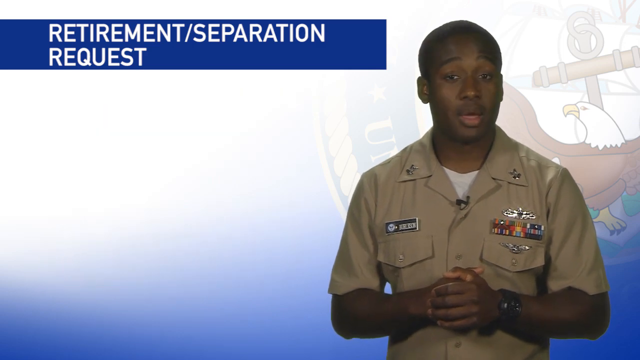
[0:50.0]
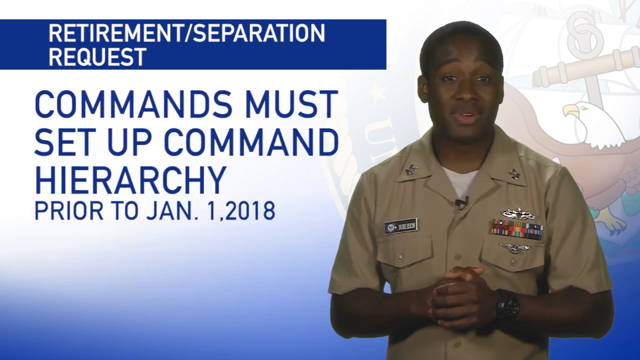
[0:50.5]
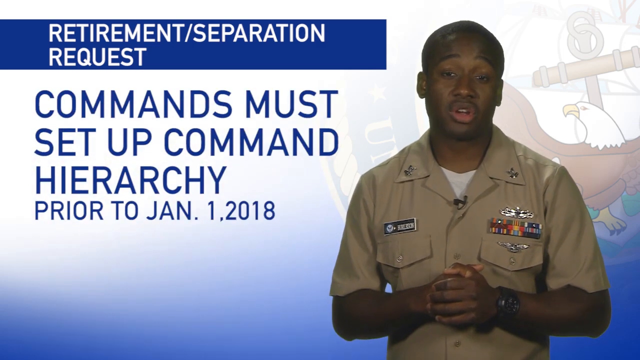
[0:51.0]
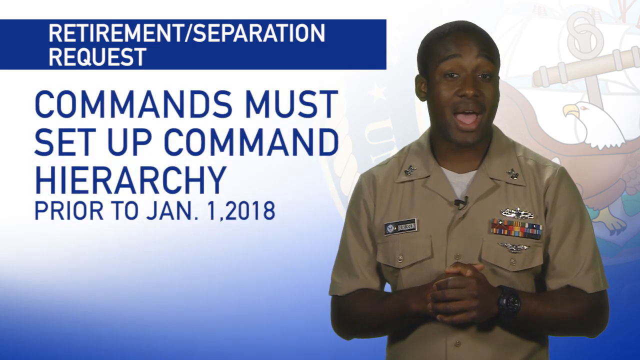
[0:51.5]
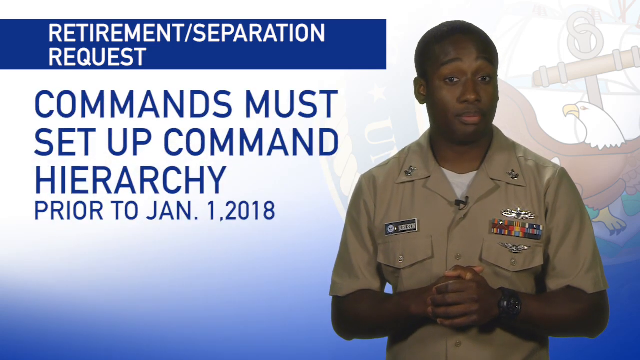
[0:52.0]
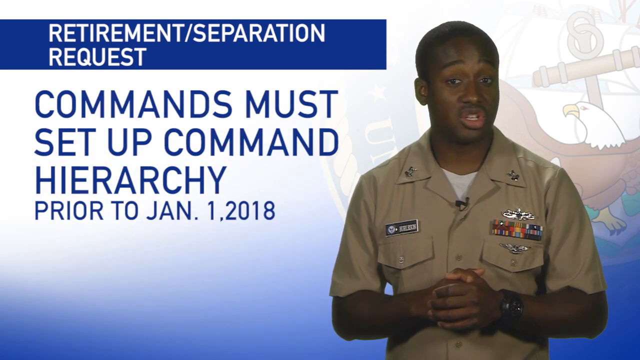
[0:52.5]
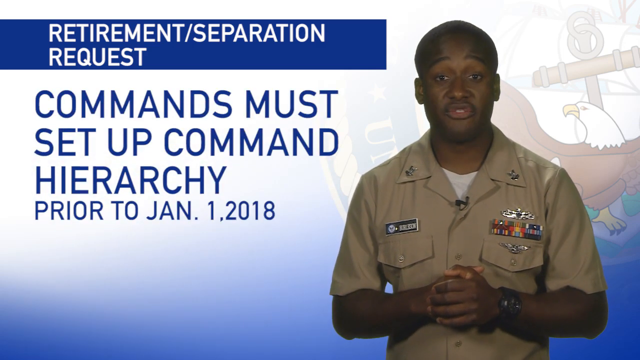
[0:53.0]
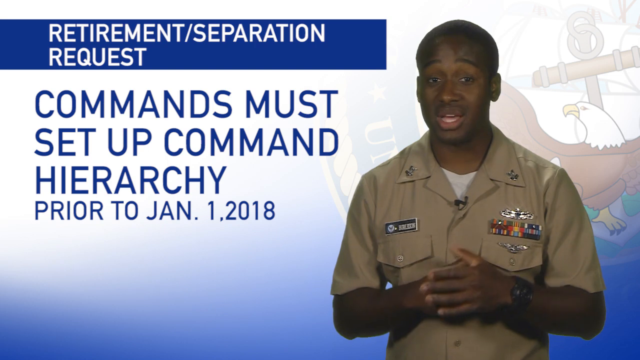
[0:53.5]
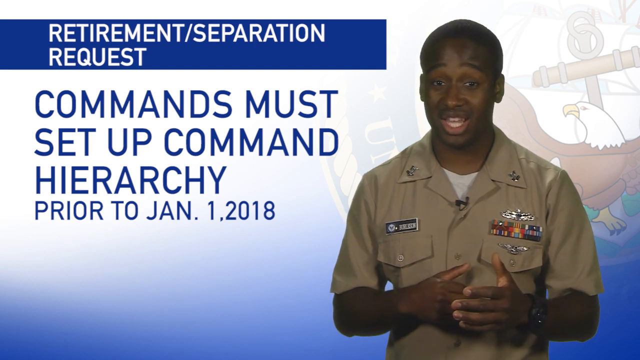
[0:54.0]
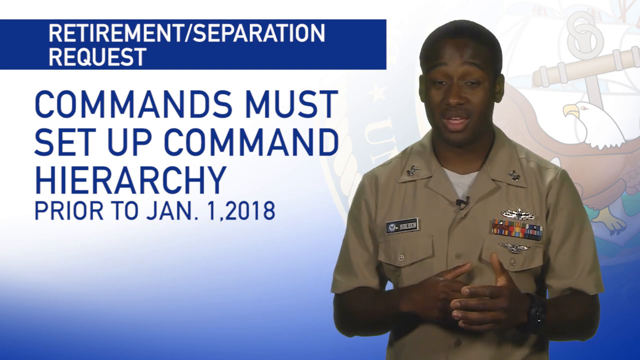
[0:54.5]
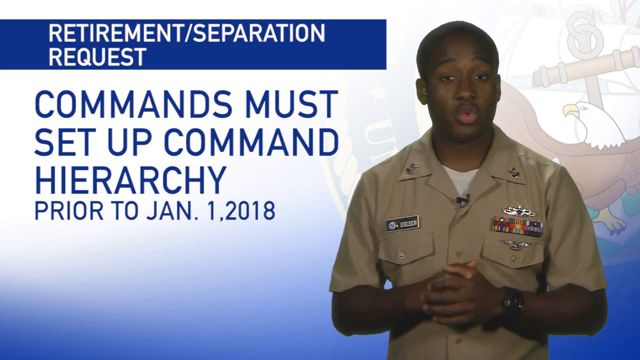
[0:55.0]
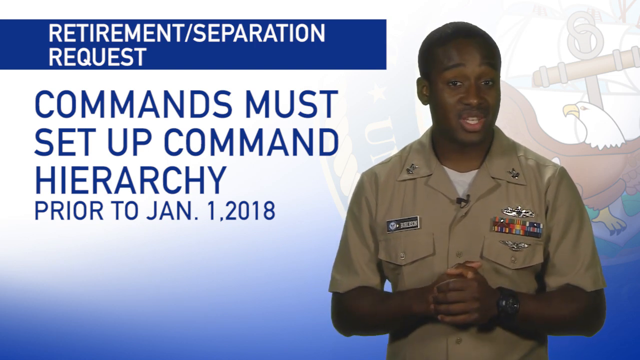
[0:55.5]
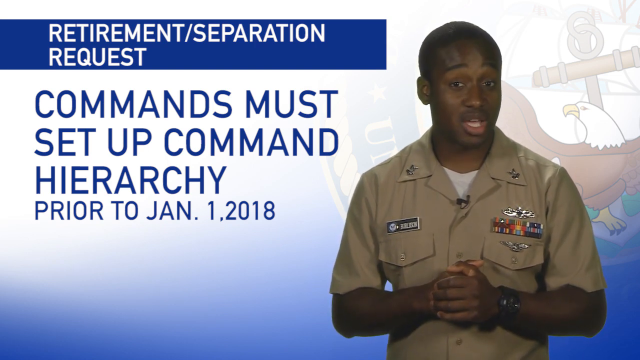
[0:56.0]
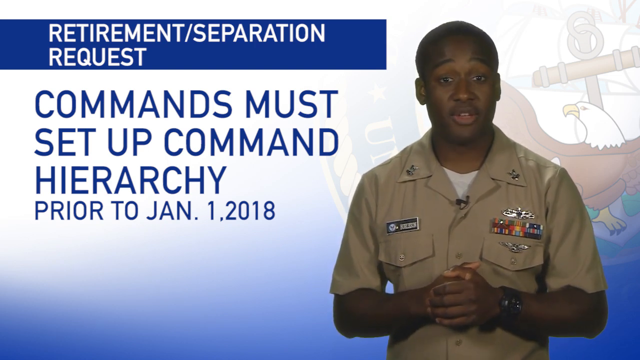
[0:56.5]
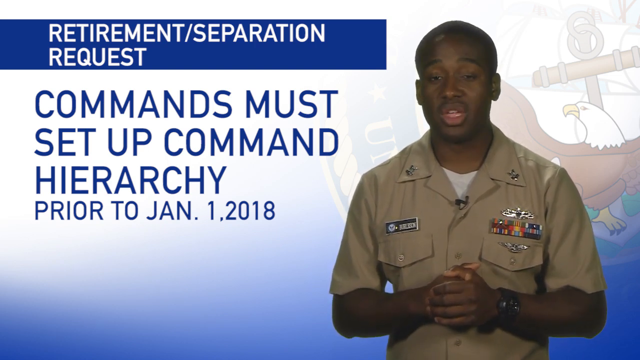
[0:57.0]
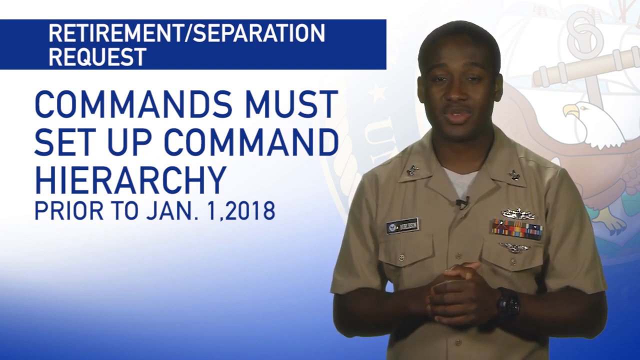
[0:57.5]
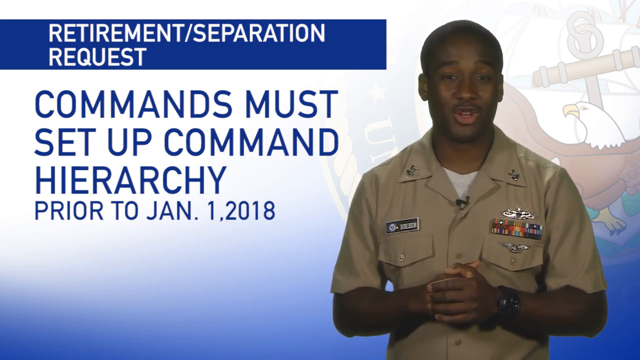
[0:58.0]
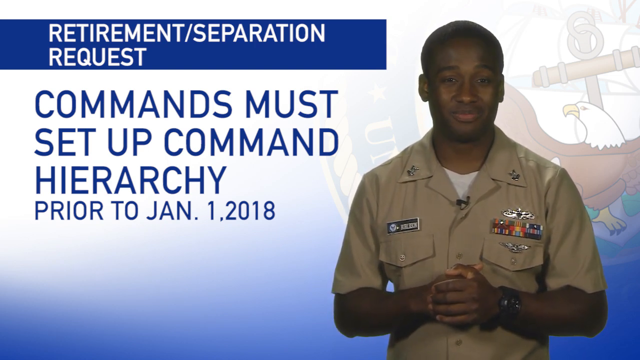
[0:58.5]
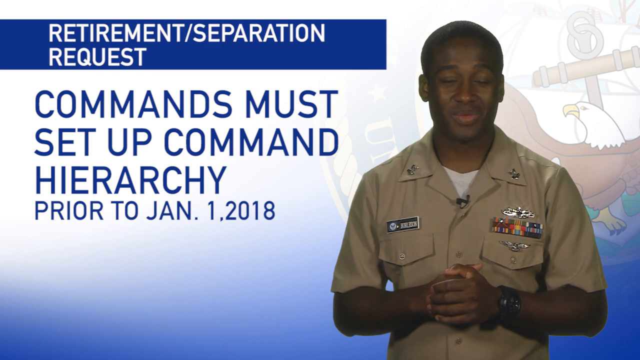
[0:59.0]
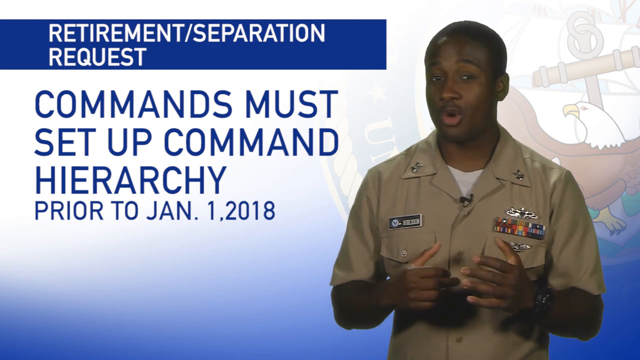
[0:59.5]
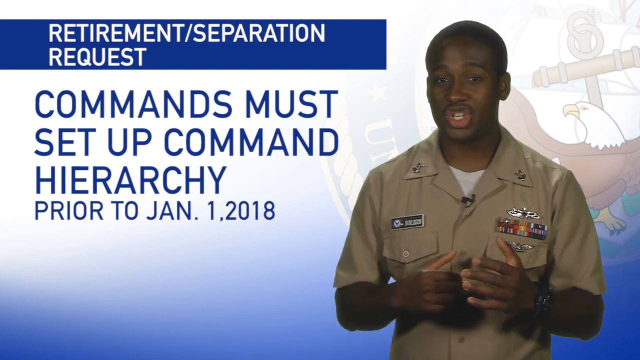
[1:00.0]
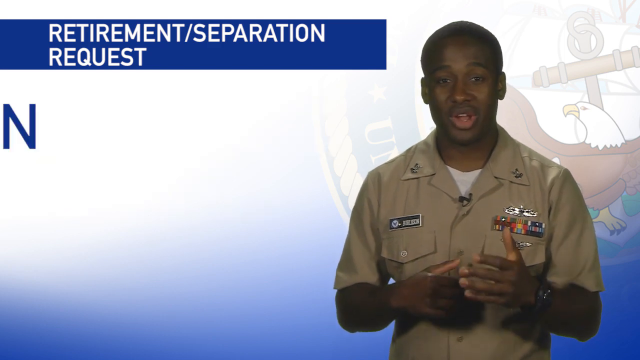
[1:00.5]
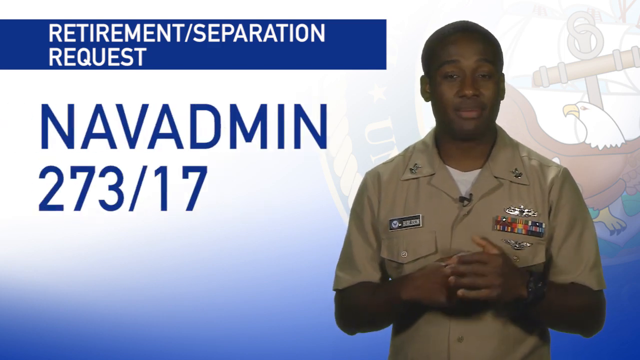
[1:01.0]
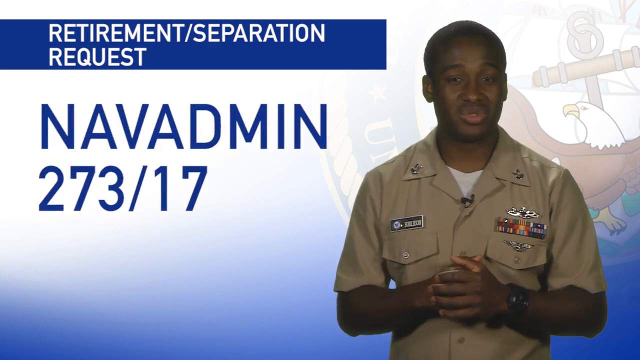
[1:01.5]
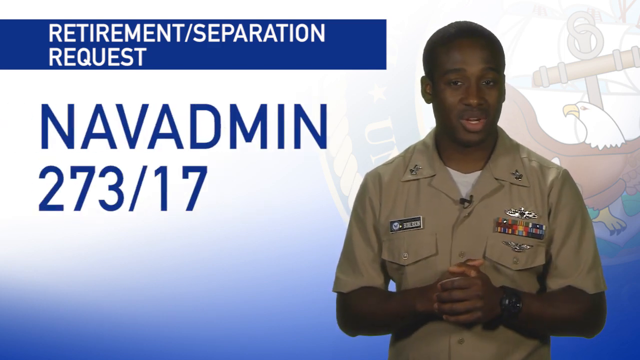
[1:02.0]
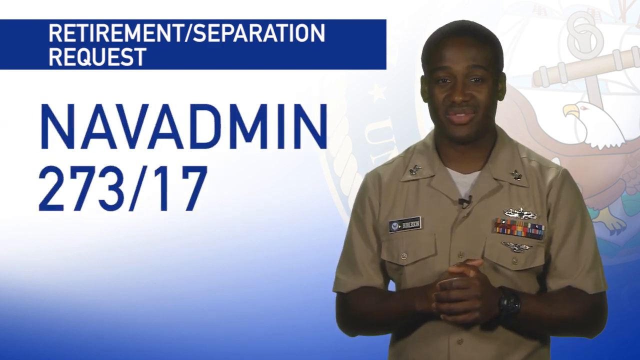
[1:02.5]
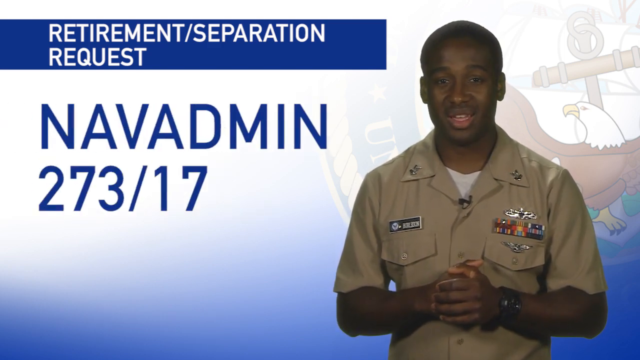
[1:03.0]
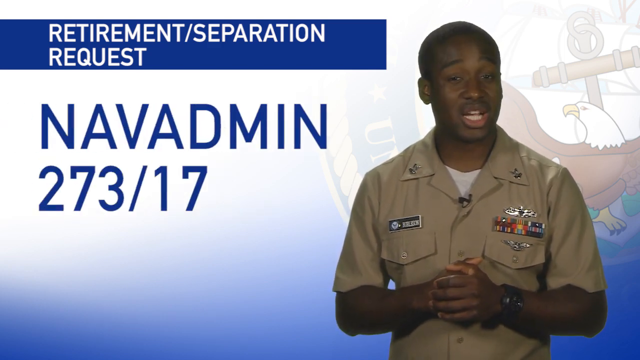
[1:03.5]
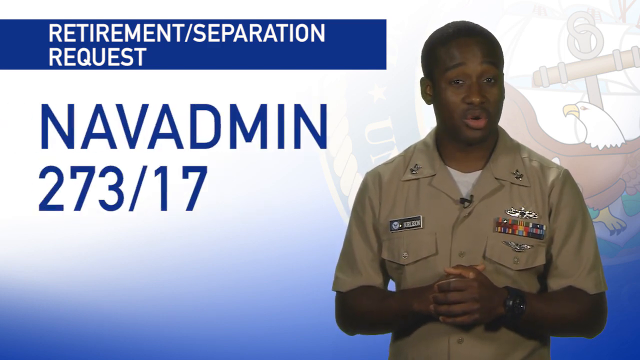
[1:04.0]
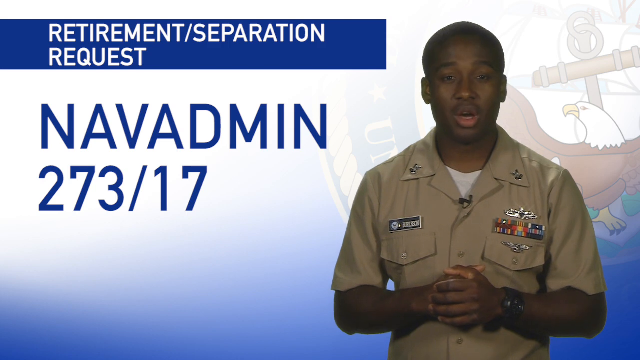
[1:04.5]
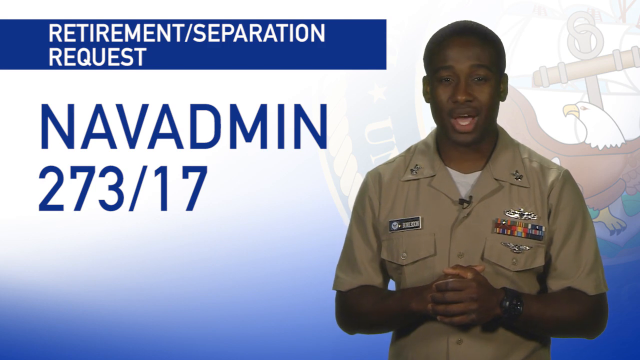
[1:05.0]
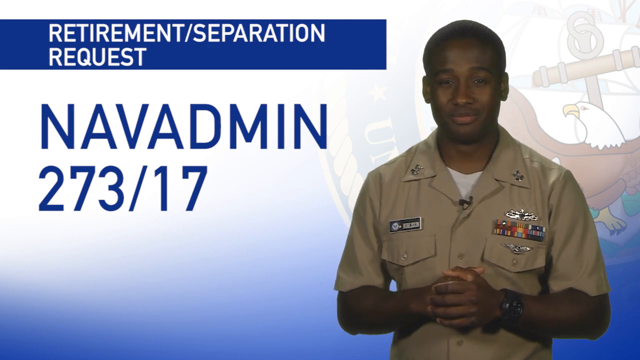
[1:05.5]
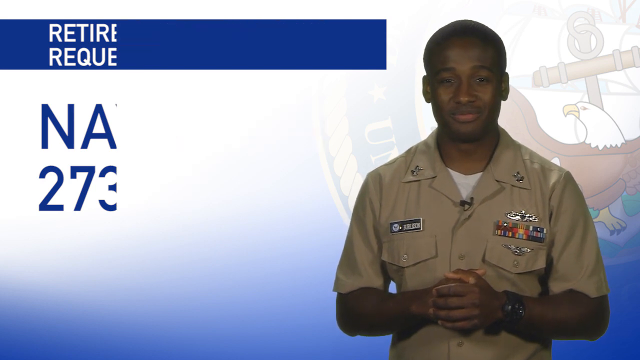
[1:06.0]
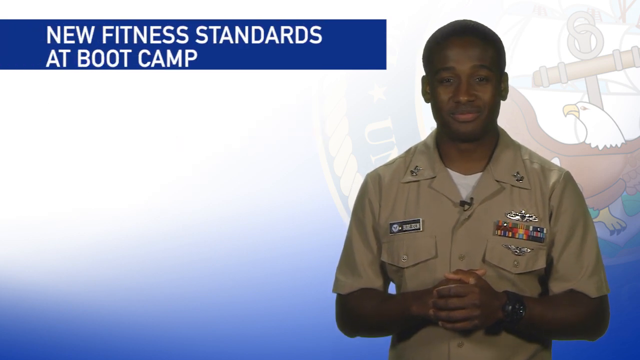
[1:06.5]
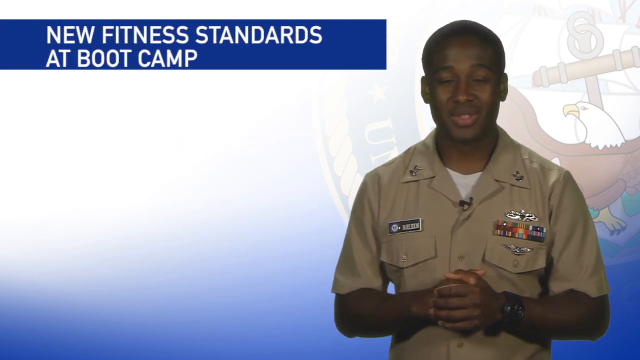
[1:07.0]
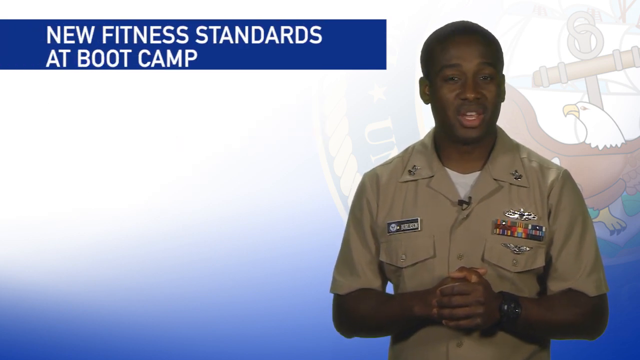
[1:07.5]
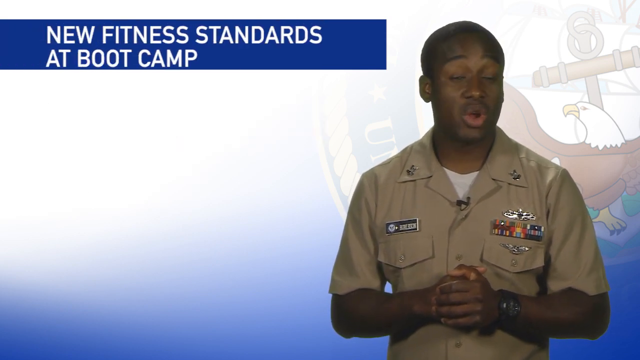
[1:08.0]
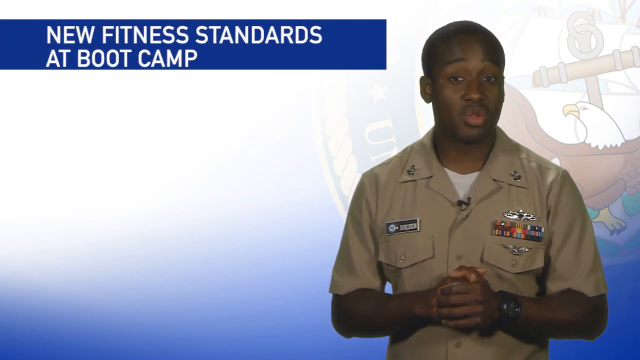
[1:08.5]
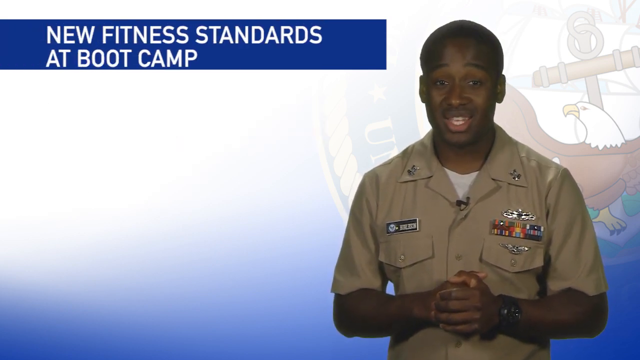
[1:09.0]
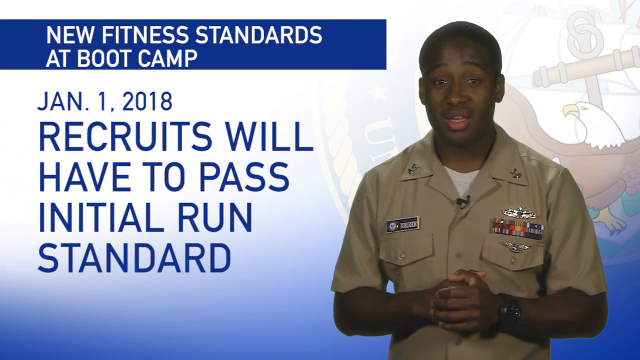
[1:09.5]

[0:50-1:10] A young Black soldier wears a brown shirt with medals on his chest and his name on the other side; his hair is shaved in a buzz cut. The background is the United States government logo with an eagle. White writing on a blue background reads "Retirement separation request," and underneath, in bigger letters, "Commands must set up command hierarchy prior to January the 1st 2018." The man gestures with his hands as he explains. Text on the screen then reads "NAVADMIN" with the numbers "273/17." Next, letters on the screen read "New fitness standards at boot camp," with "January 1st 2018 Recruits will have to pass initial run standard" underneath. He seems friendly and welcoming as he explains.